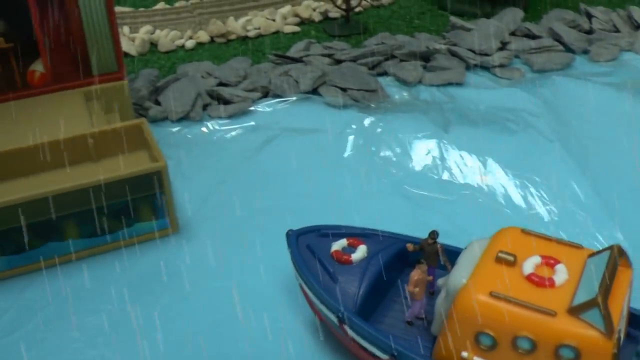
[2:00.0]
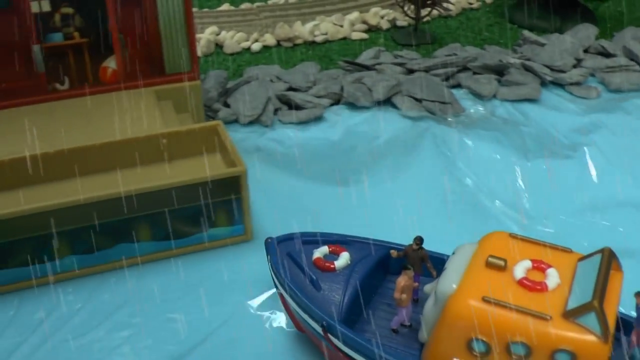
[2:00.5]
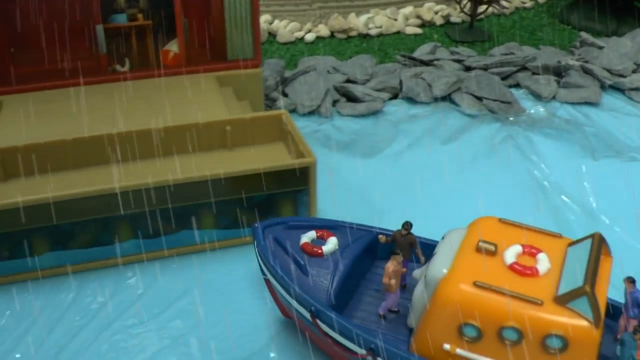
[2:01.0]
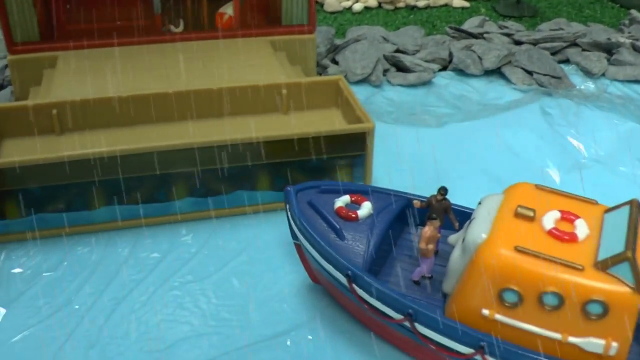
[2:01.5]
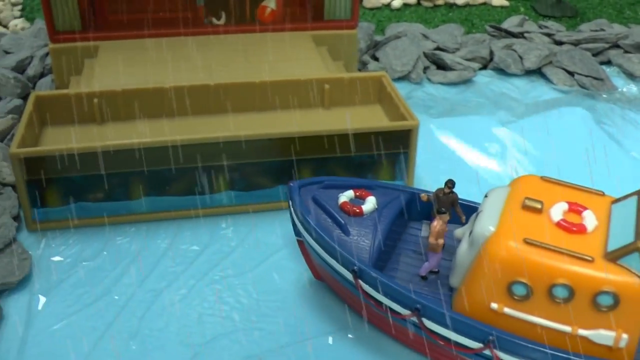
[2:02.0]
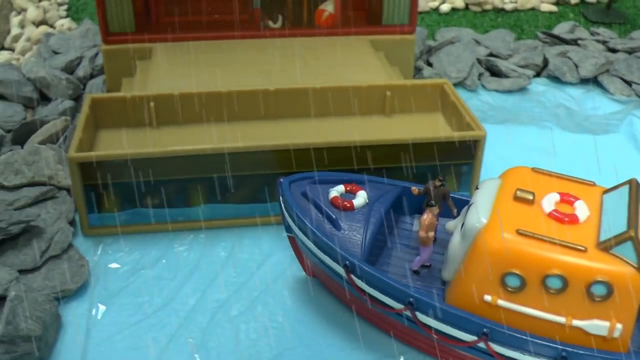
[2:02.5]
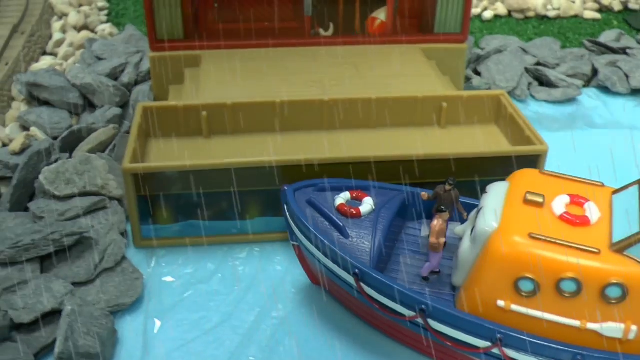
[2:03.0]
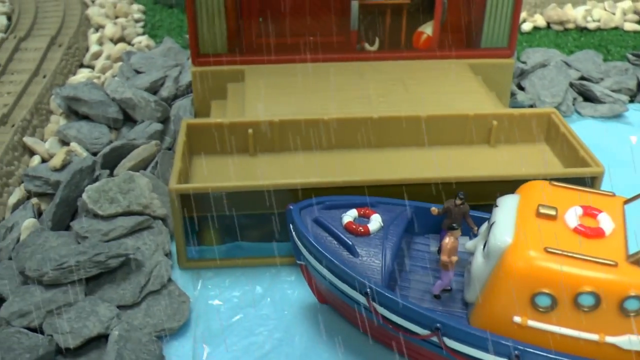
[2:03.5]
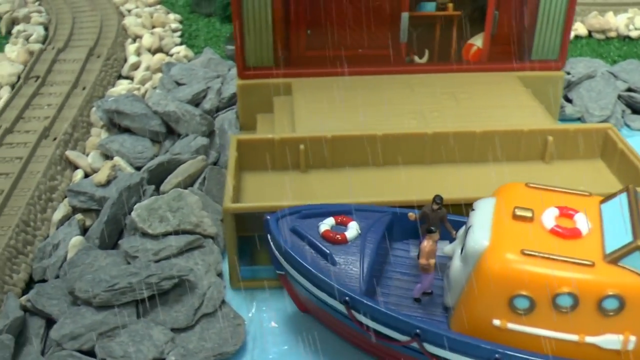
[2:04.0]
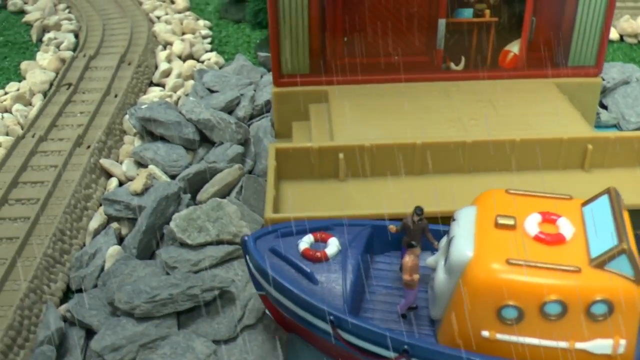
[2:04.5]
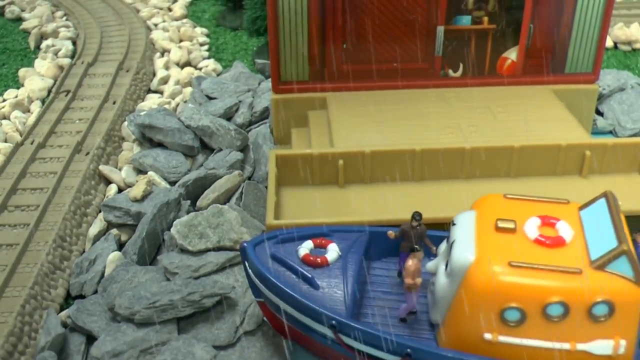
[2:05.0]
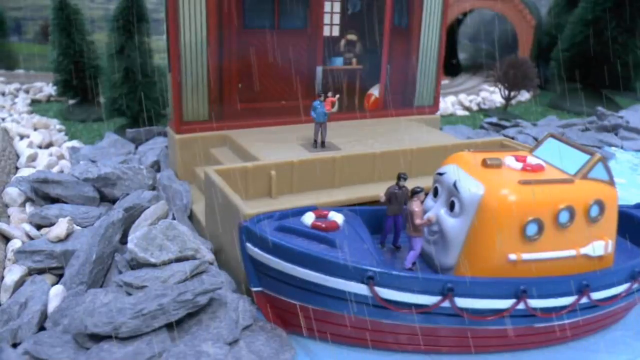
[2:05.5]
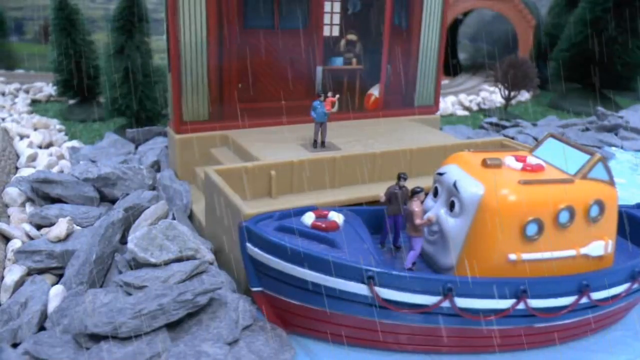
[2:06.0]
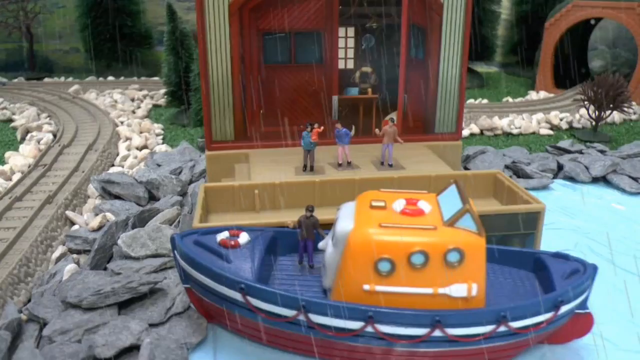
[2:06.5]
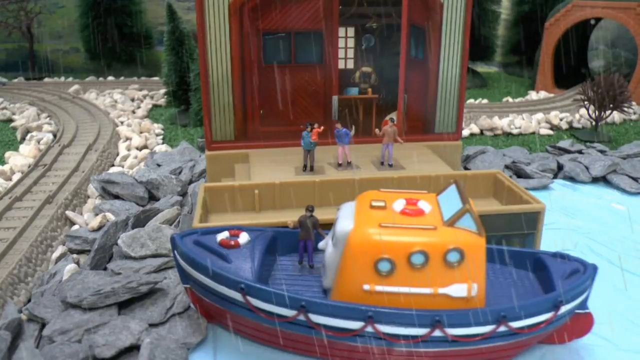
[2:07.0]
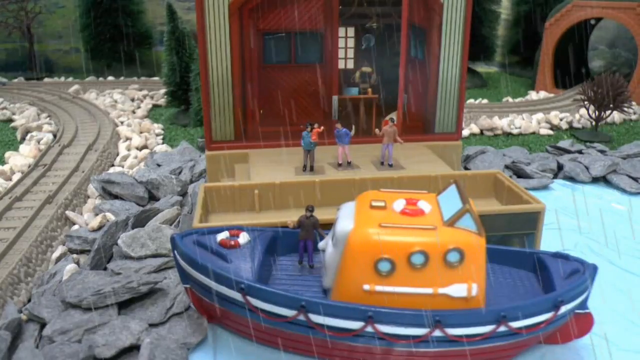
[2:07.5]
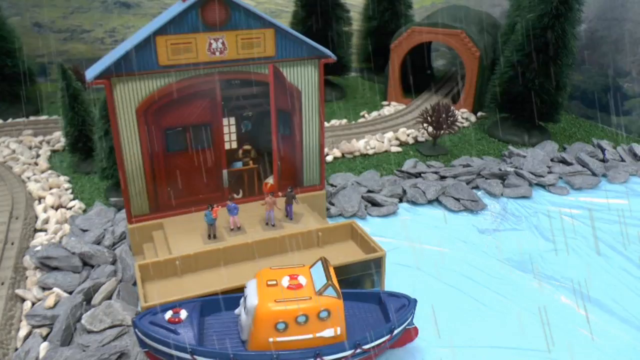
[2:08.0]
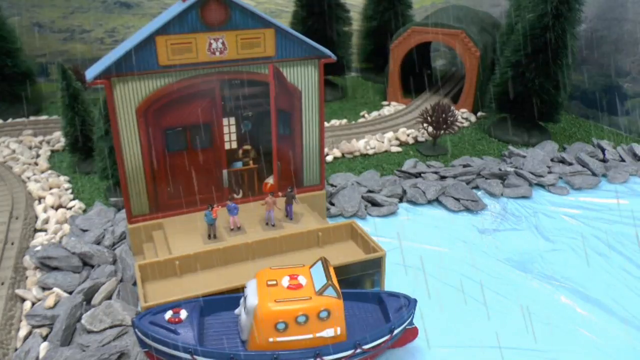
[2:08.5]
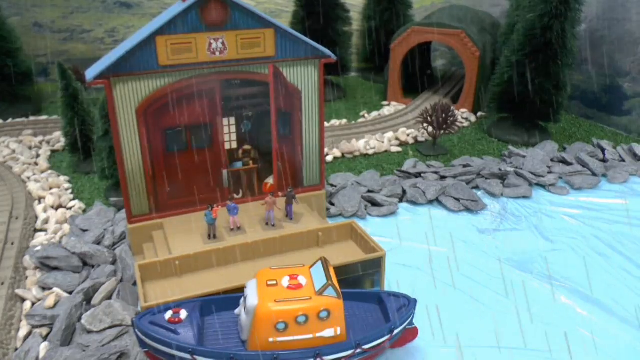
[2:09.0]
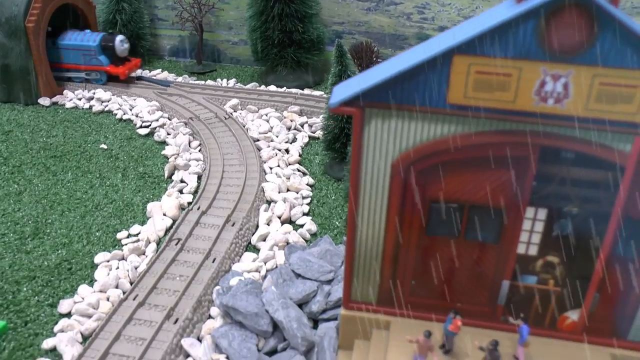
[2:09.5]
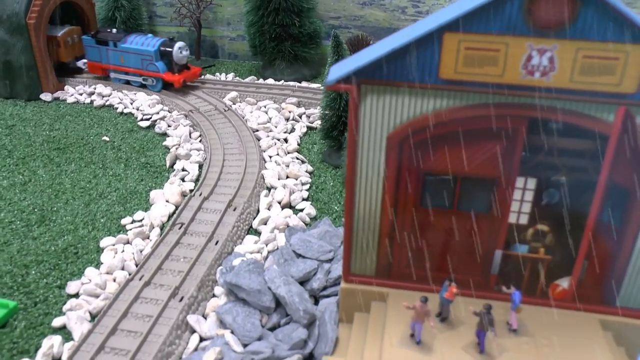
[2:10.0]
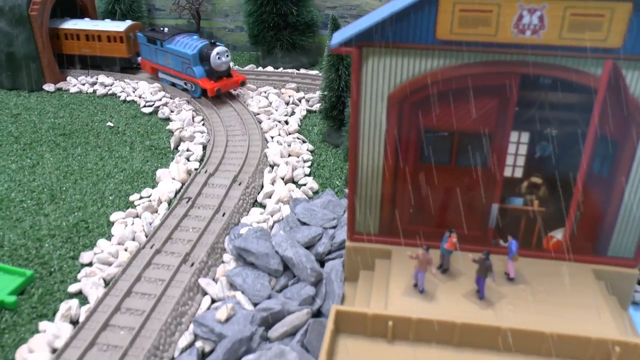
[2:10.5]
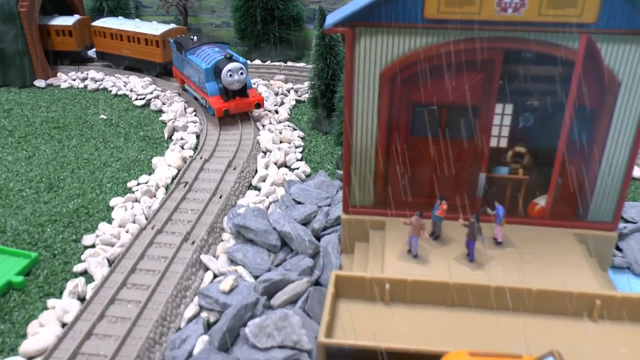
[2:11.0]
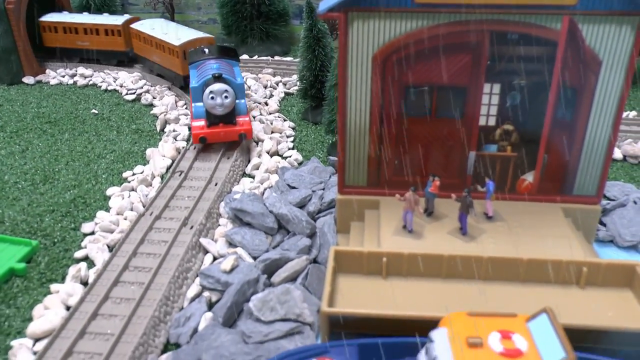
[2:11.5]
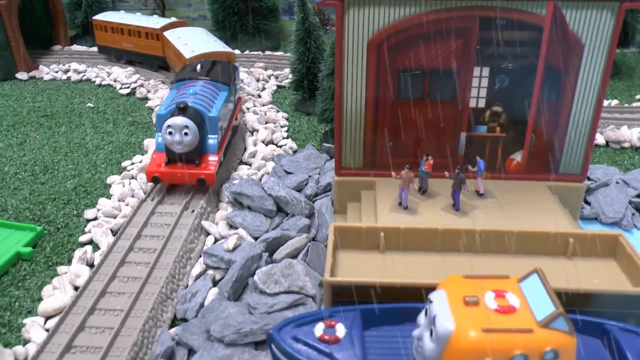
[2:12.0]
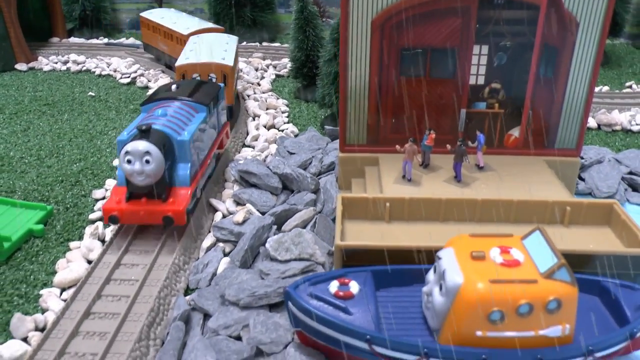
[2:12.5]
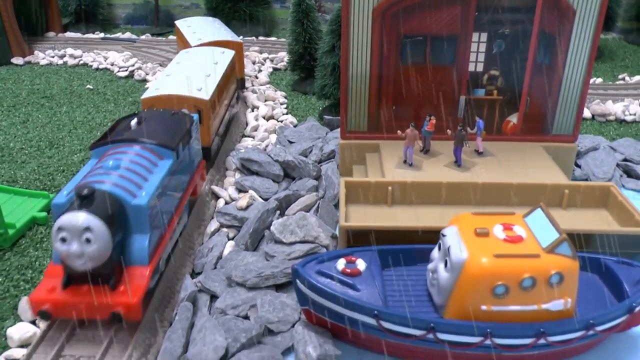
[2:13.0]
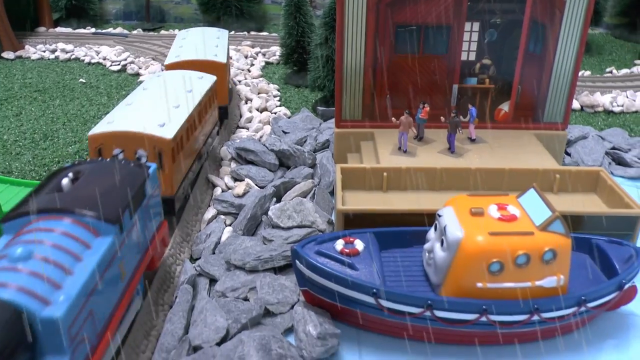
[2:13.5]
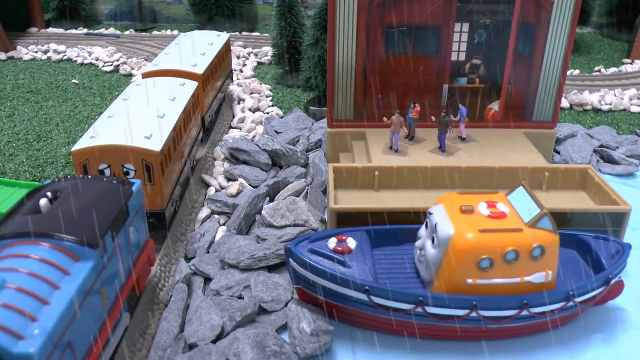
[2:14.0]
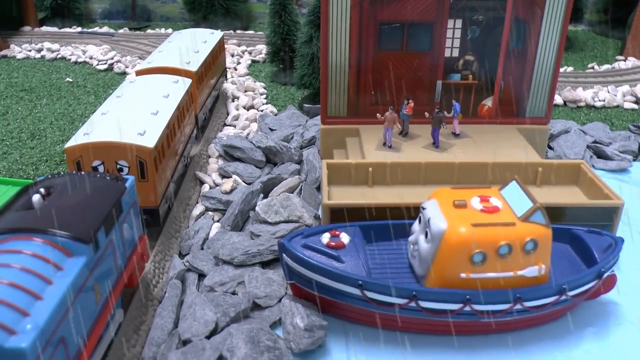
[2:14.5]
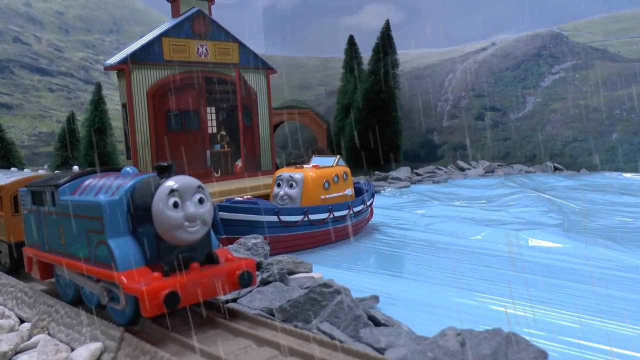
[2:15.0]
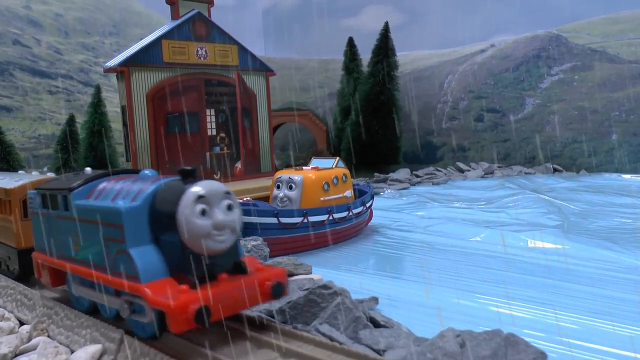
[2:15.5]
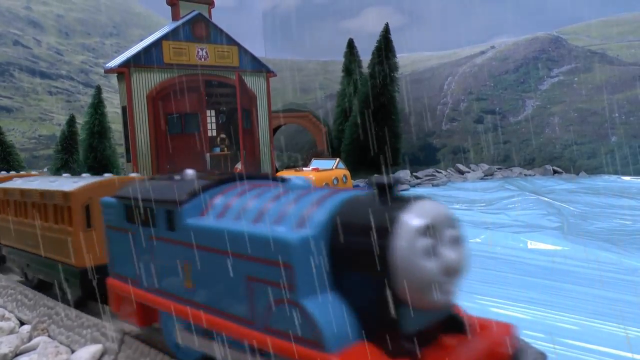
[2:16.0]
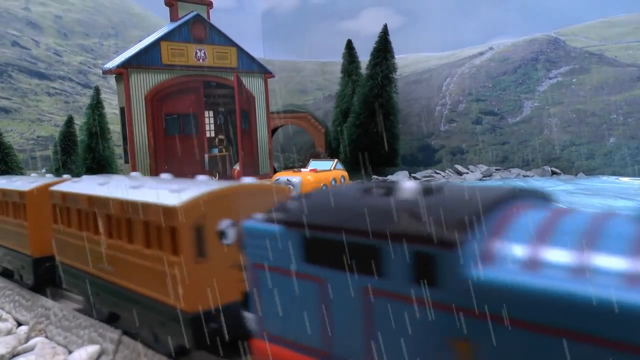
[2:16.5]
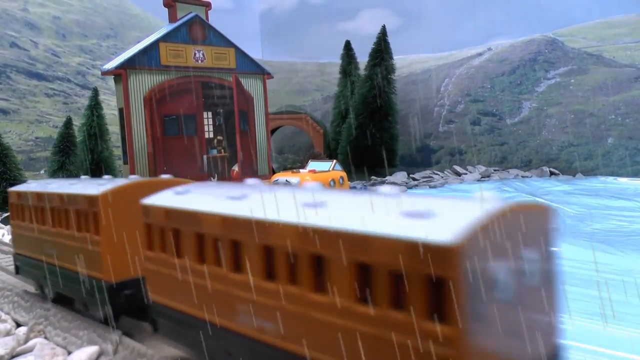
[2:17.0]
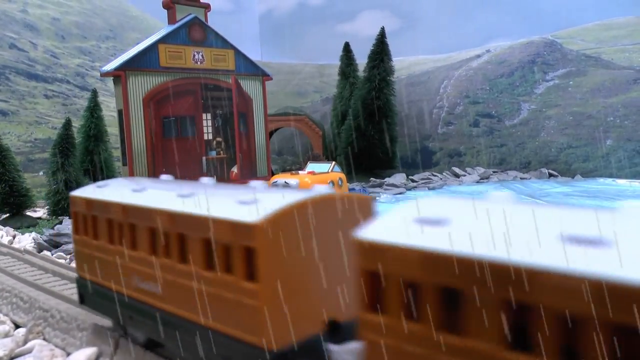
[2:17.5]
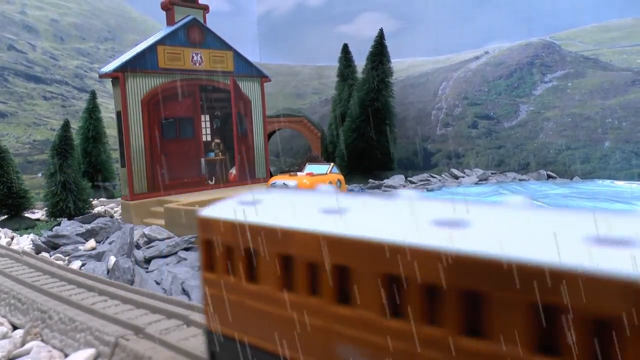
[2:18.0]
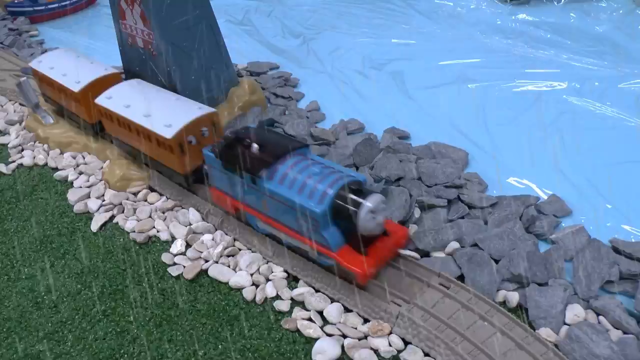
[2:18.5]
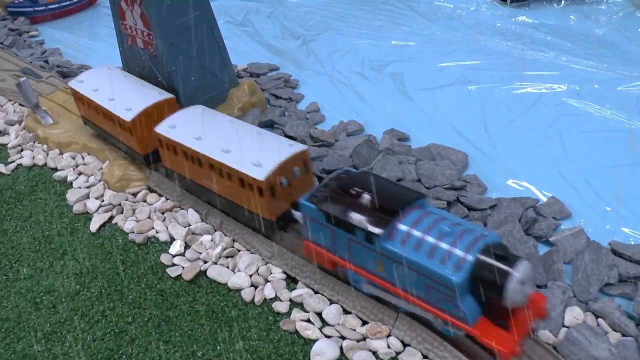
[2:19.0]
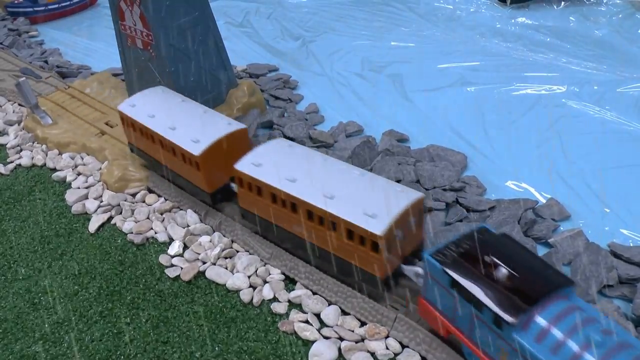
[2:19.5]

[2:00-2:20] Continuing up to the right, the boat goes past the rocks to a little brown docking area with a little red building at it. It pulls up to the tip and runs down the side close to the dock. Big gray rocks line the right side of the docking area, and a train track goes up to the left with white rocks and grass beside it. The right-side door of the building is still open as the boat comes to a stop. In a front shot, two people are still at the front, while the others have gotten off the back and are standing on the dock. Then four people are on the dock and one on the boat, and then all of the people are on the dock with none on the boat. Behind the building, a road comes in from the left, and train tracks go behind the building and then up. Near the top is a tunnel for the train with big trees beside it, and the boat is still at the dock. A train engine comes out of the top left corner, where tracks go across and come down. It is blue with a white face and chugs along carrying two orange carts with white tops. It comes down to where the boat is, just to the left of it, and the blue engine goes halfway off the bottom. A wide shot of the train shows the boat just to the right of it in the bottom left, and then the train goes off the bottom right of the image. An overhead shot follows it going down the tracks.